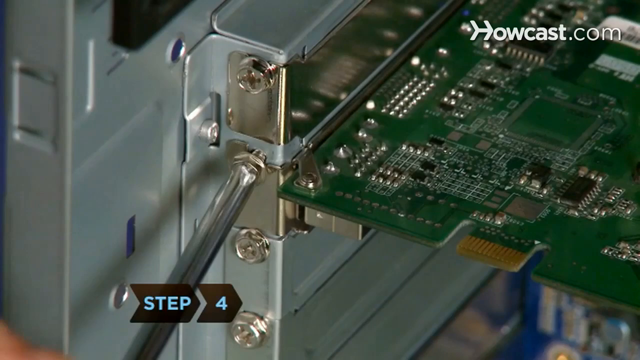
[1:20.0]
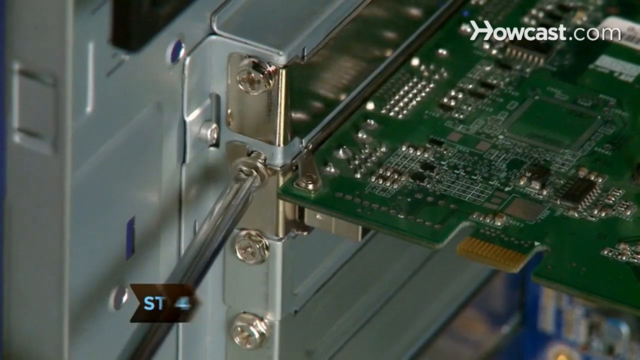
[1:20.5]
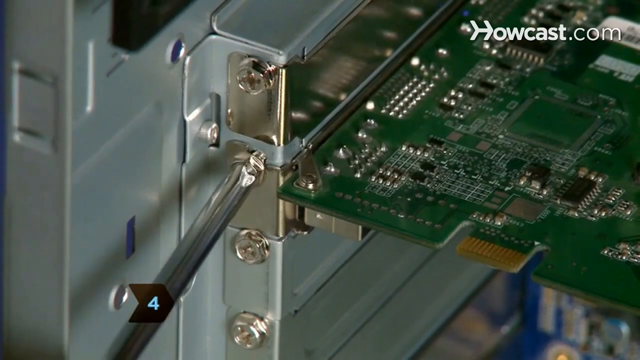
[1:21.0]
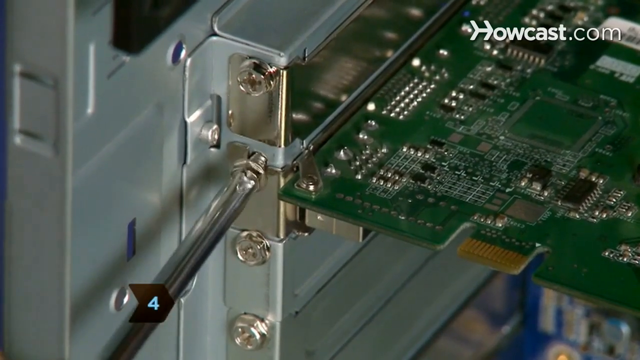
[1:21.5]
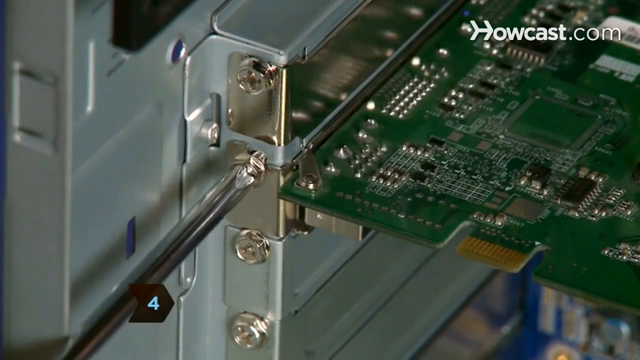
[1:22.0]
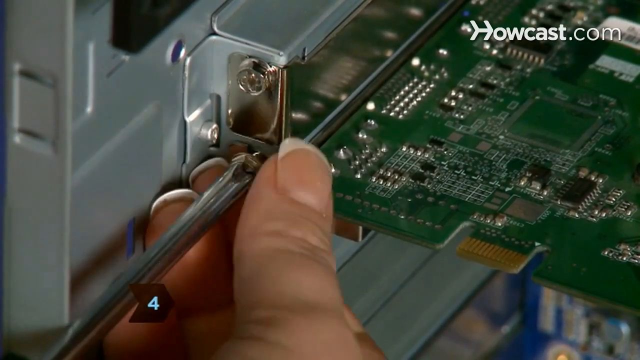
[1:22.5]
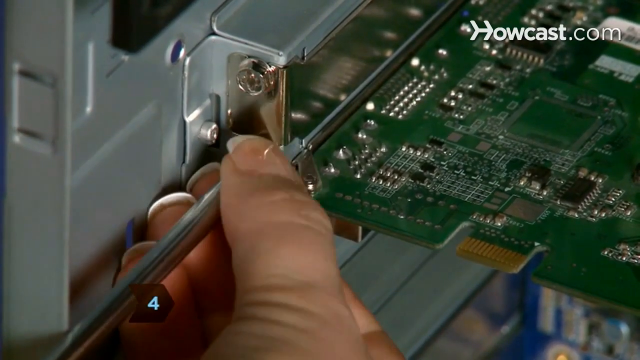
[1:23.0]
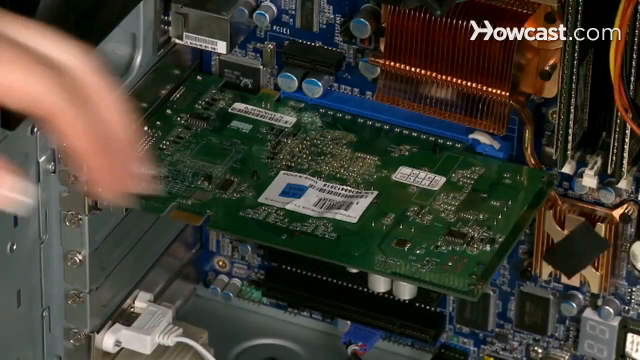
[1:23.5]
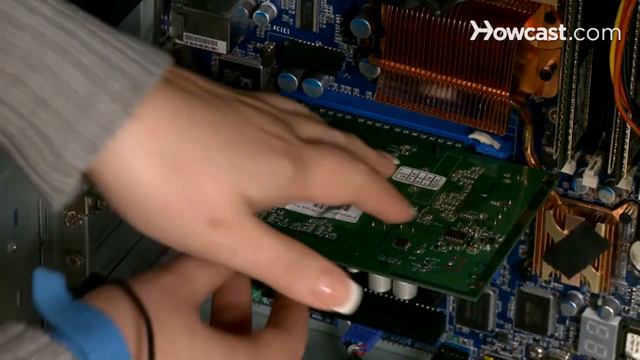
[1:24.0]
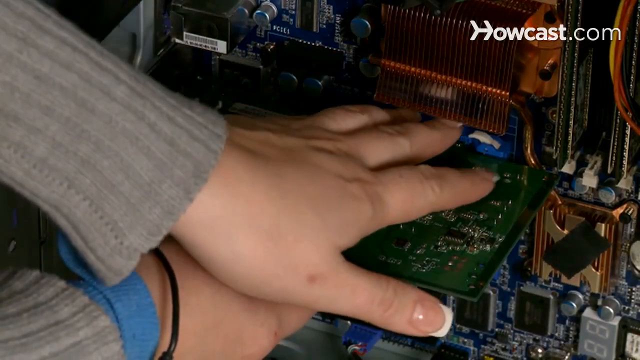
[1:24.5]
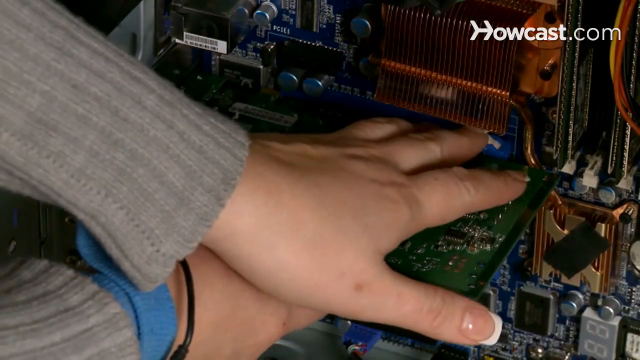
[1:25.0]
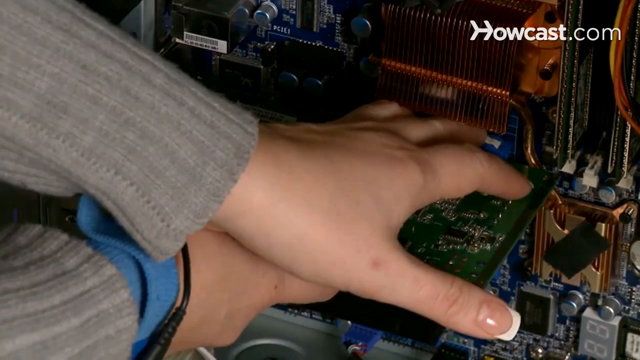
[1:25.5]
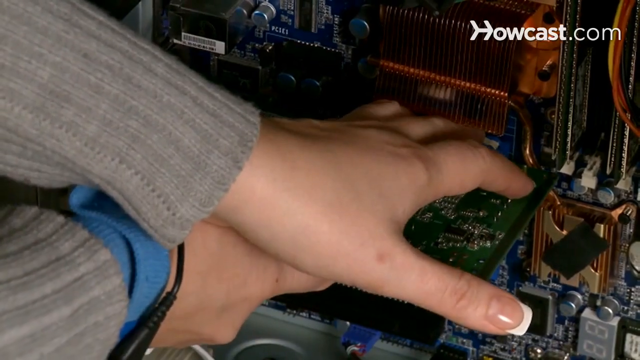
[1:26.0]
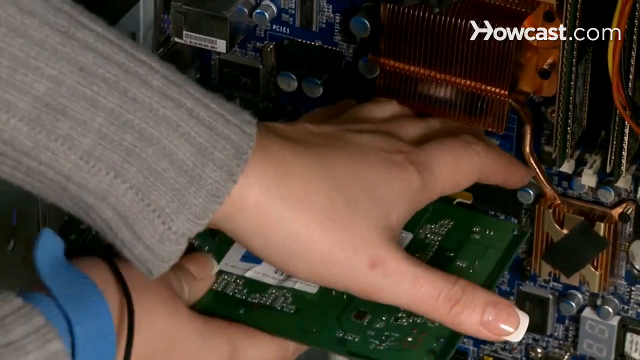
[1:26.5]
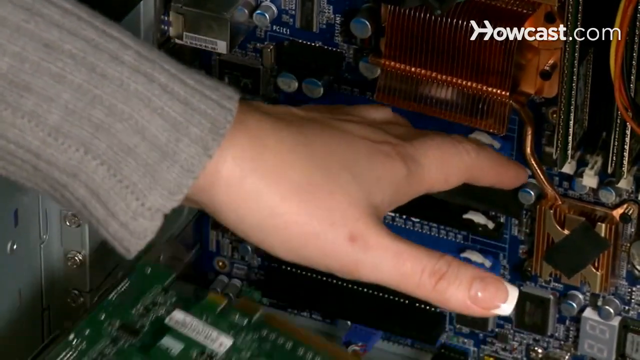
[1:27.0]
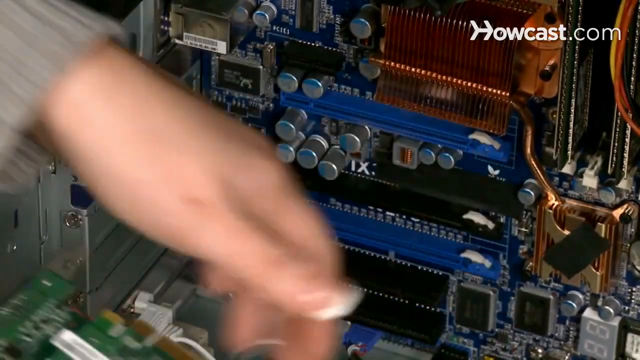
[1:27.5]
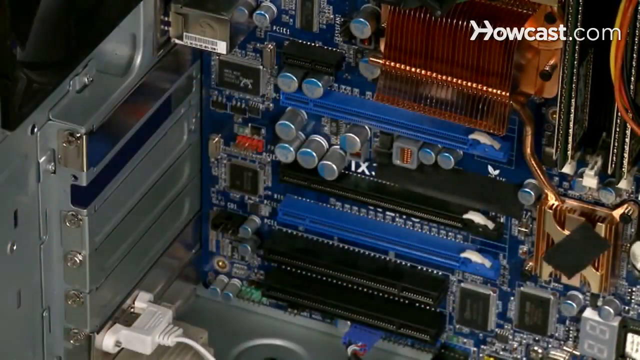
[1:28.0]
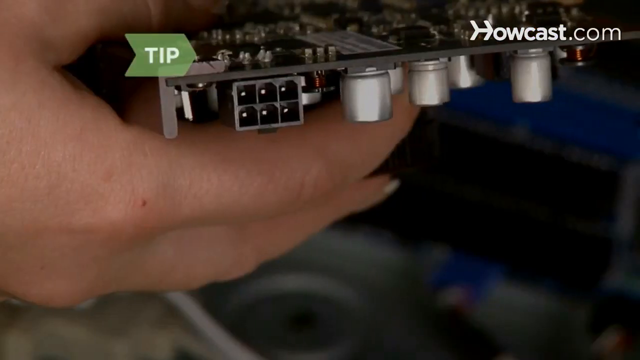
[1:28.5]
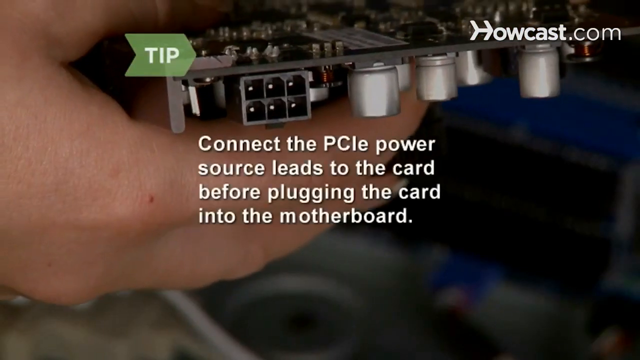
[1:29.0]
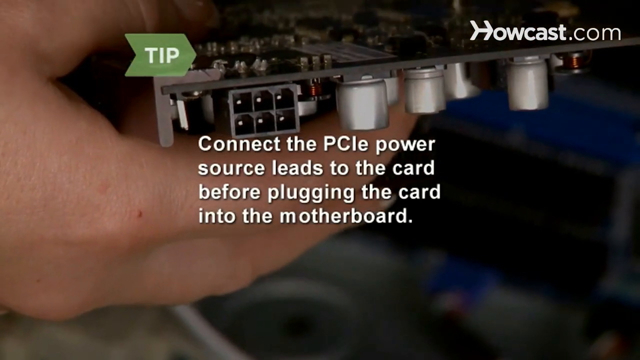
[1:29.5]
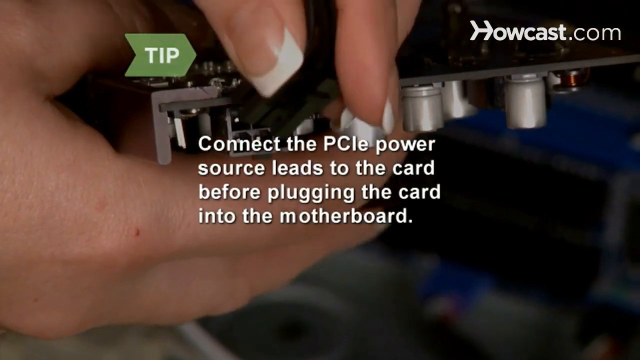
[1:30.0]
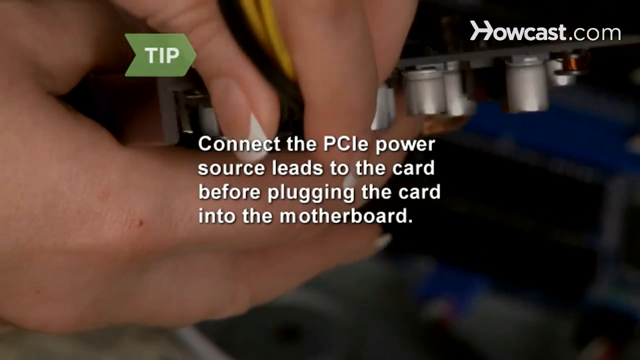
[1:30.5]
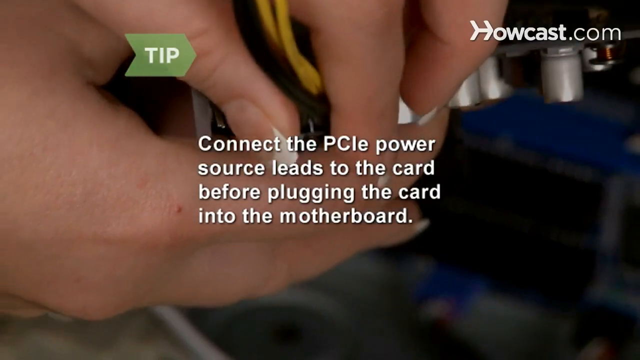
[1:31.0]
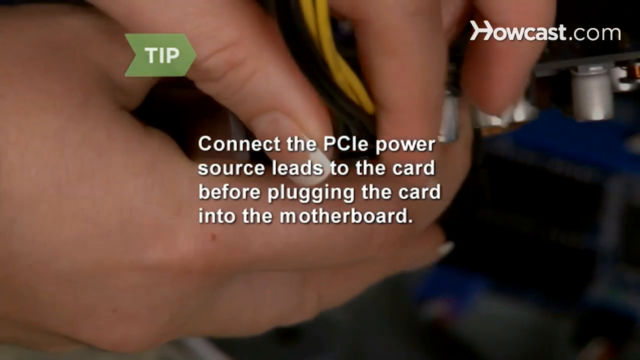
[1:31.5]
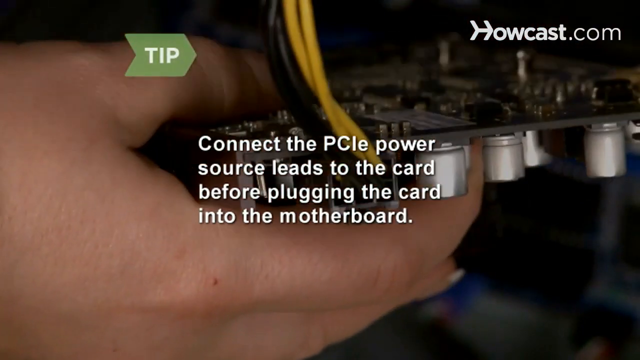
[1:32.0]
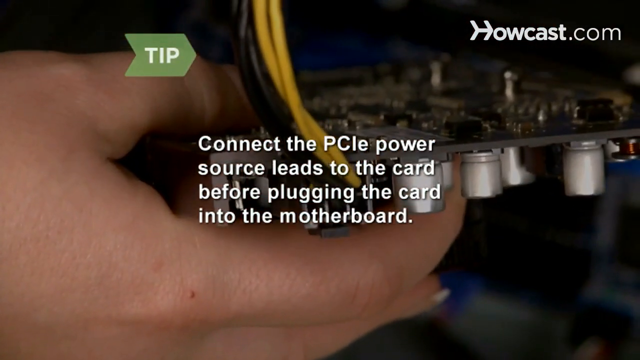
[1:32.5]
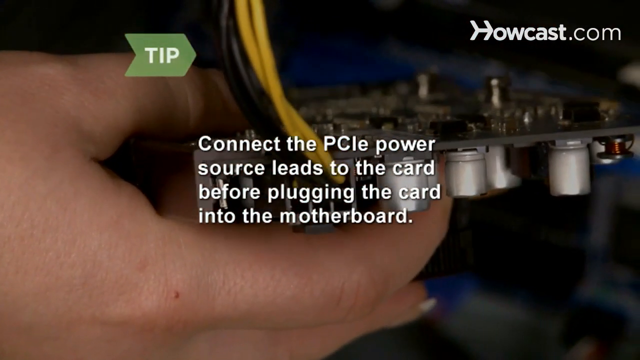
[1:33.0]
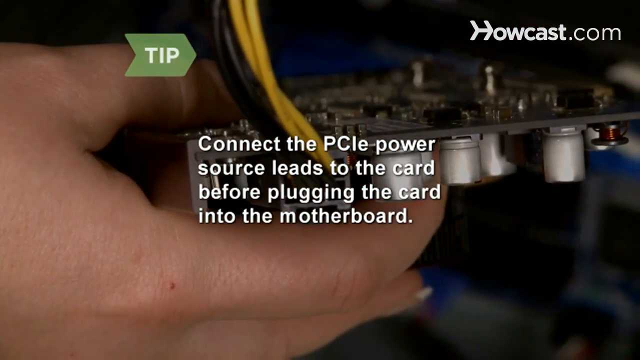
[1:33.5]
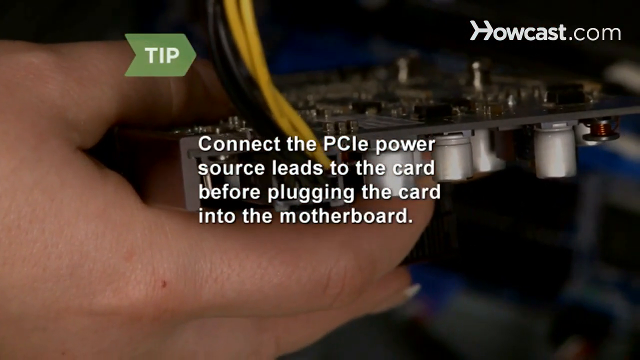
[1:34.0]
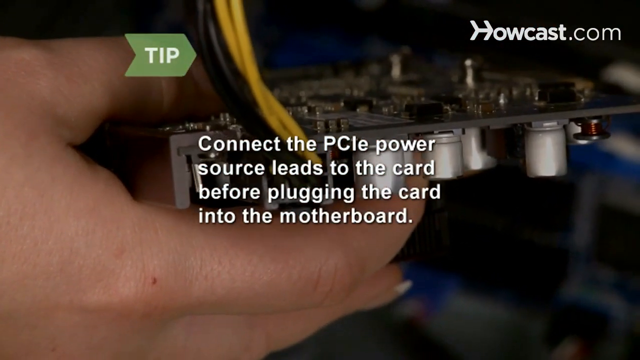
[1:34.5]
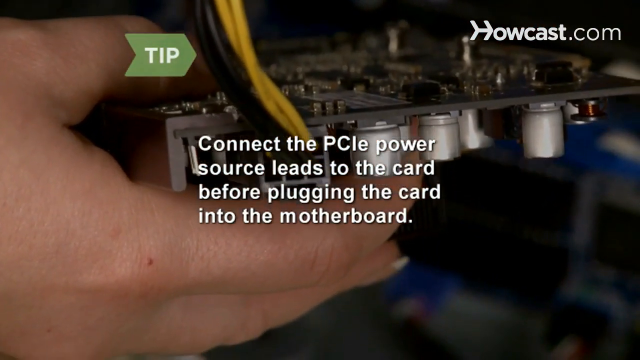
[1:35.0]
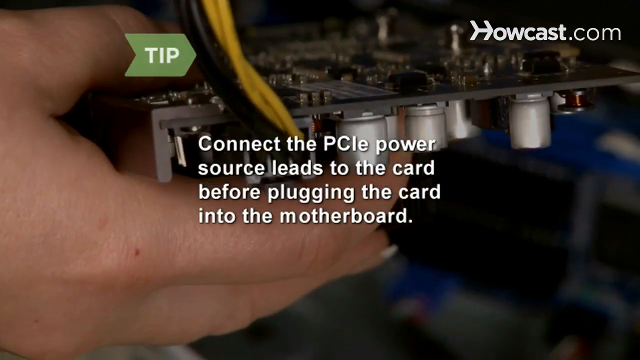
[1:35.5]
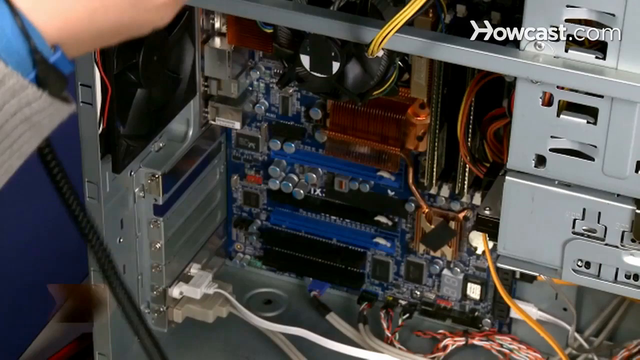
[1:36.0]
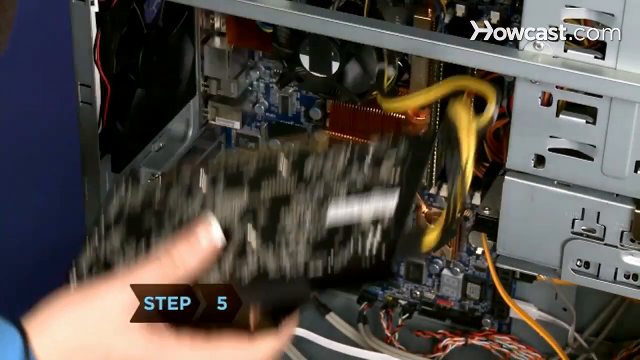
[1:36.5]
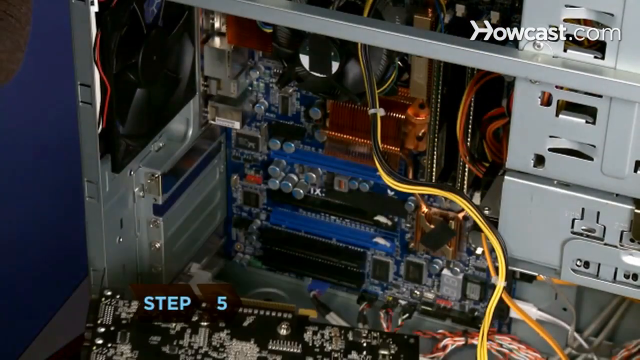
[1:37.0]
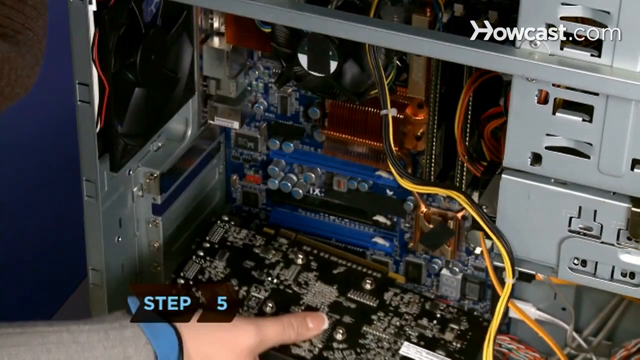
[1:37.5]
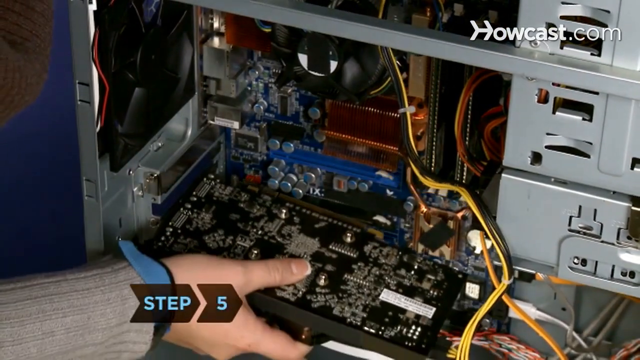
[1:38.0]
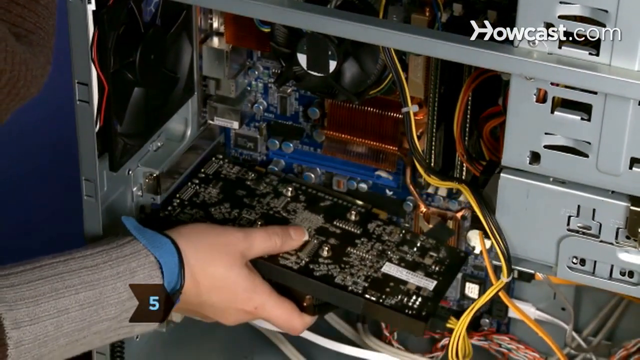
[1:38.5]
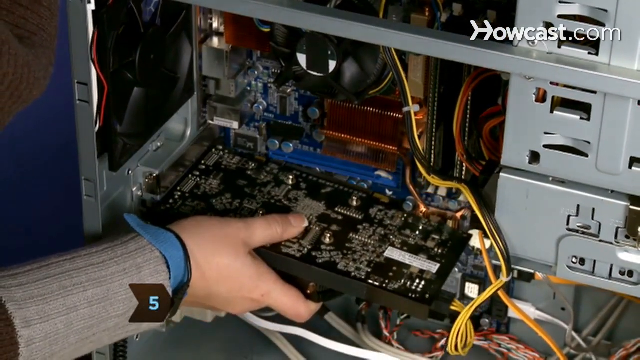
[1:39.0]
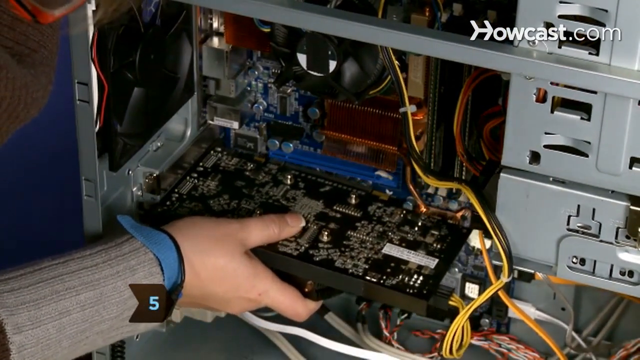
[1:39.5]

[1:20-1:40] Inside the system unit, she apparently unplugs the PCI-E power source, and what looks like a motherboard is visible. She puts in a new graphics card, apparently an NVIDIA, possibly a GTX or RTX, and then puts in the PCI-E cable.